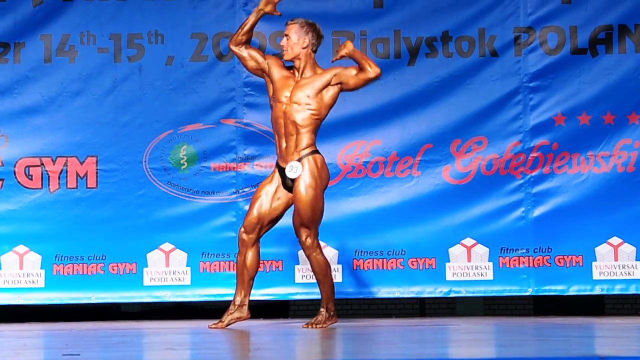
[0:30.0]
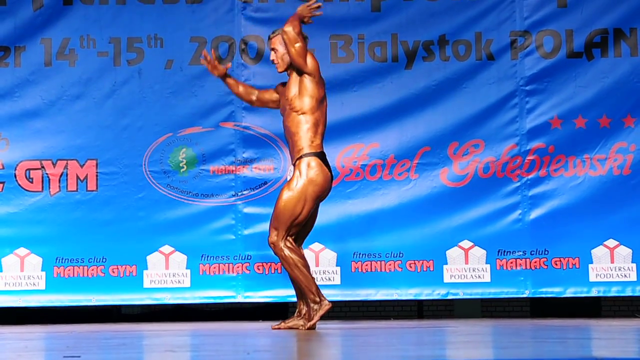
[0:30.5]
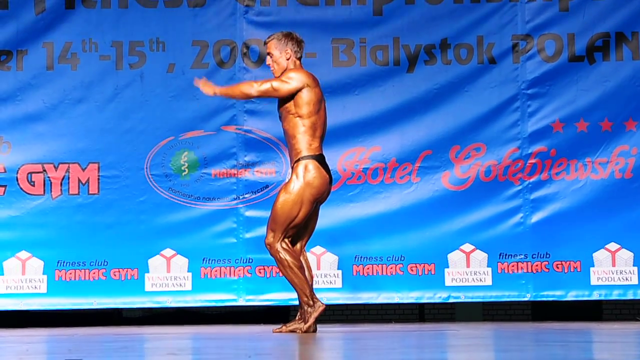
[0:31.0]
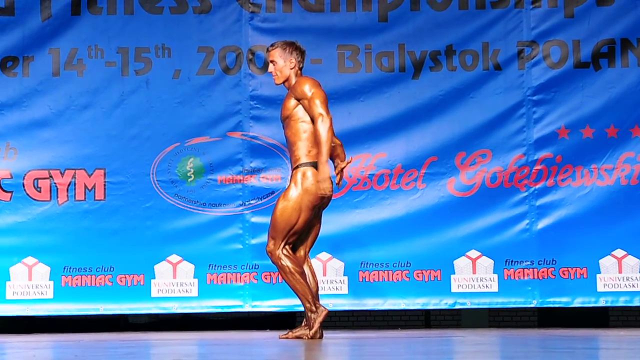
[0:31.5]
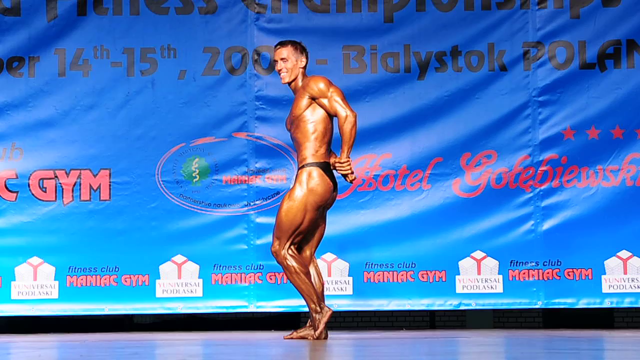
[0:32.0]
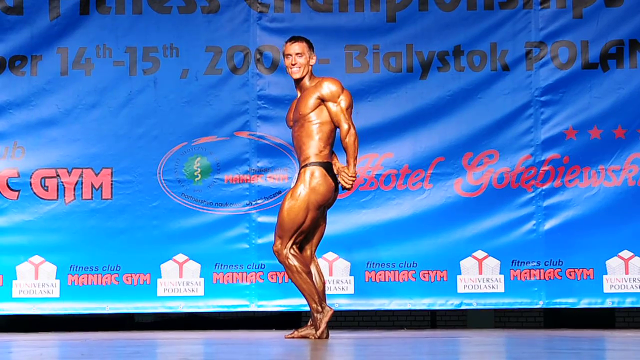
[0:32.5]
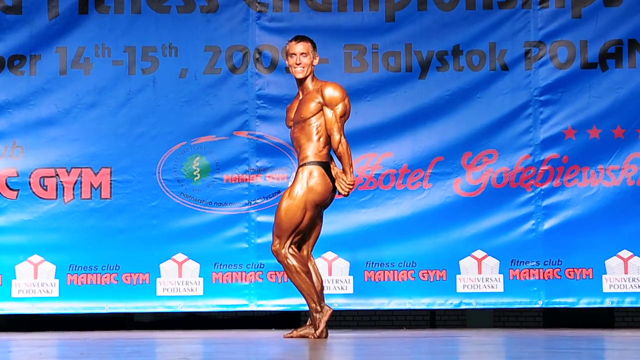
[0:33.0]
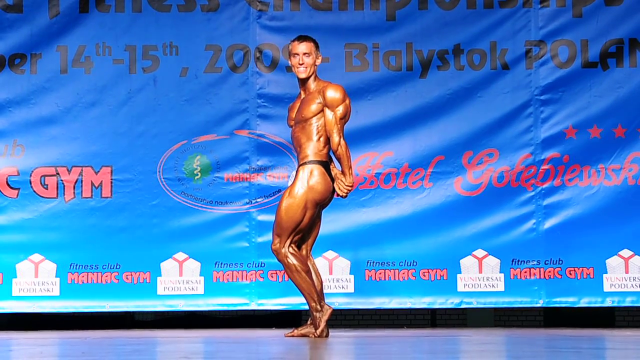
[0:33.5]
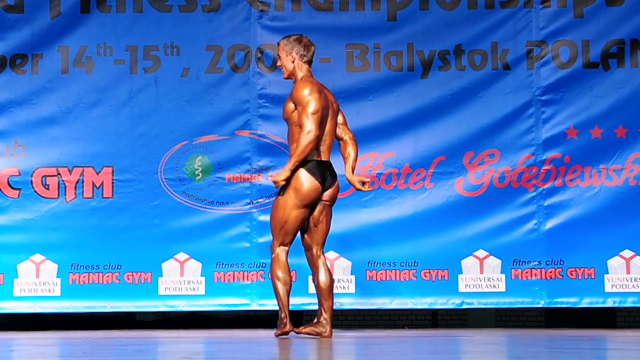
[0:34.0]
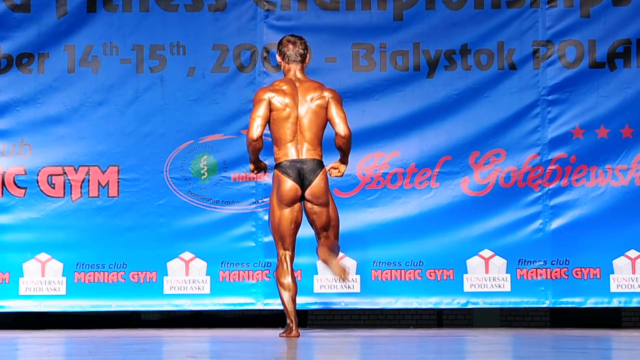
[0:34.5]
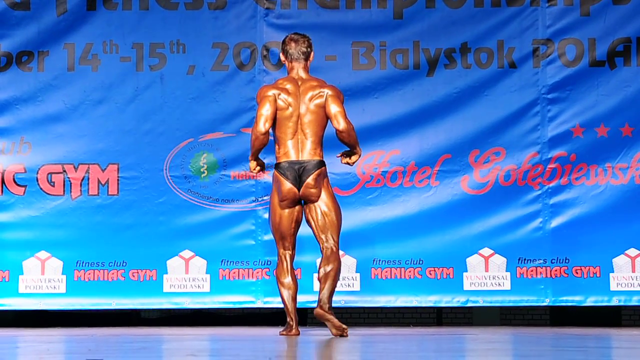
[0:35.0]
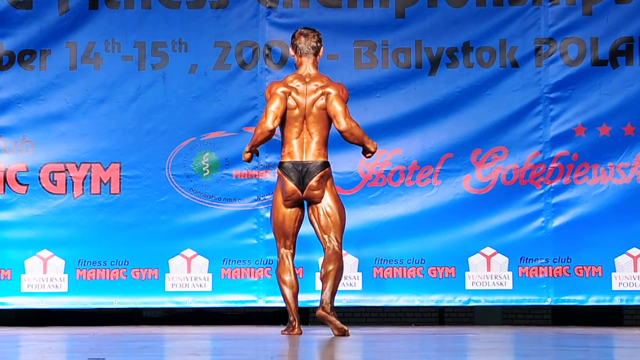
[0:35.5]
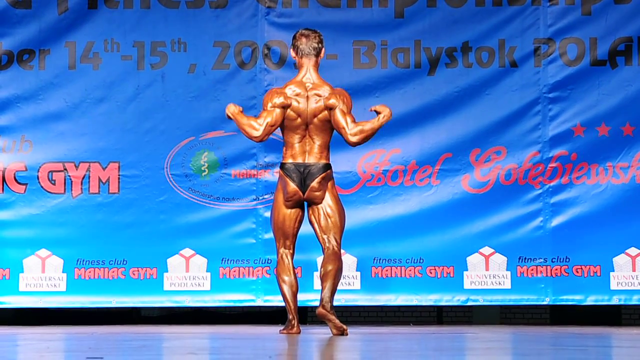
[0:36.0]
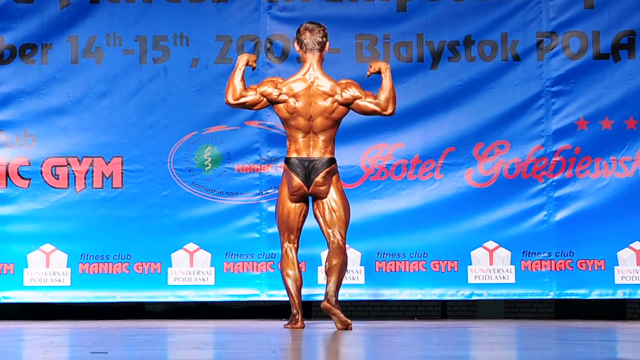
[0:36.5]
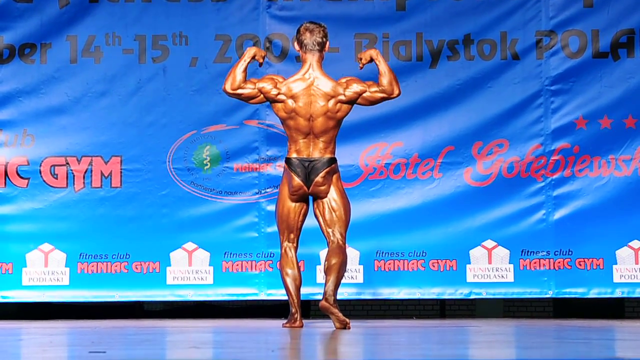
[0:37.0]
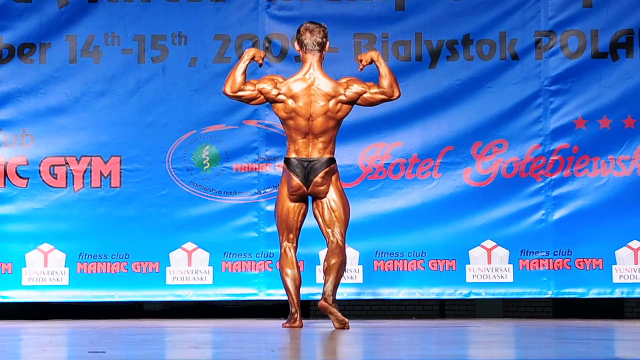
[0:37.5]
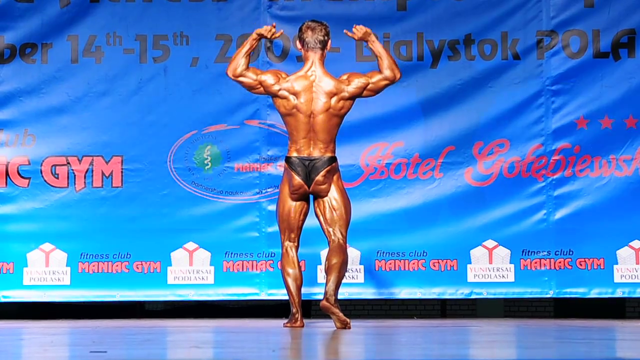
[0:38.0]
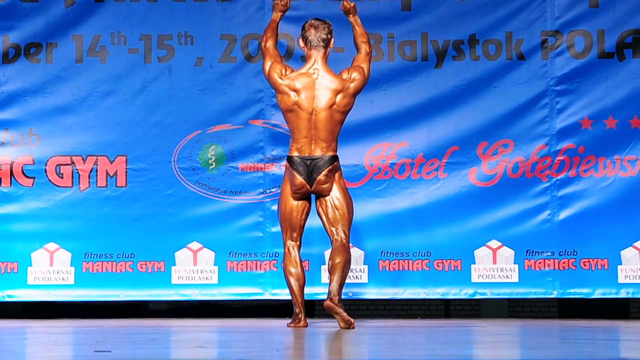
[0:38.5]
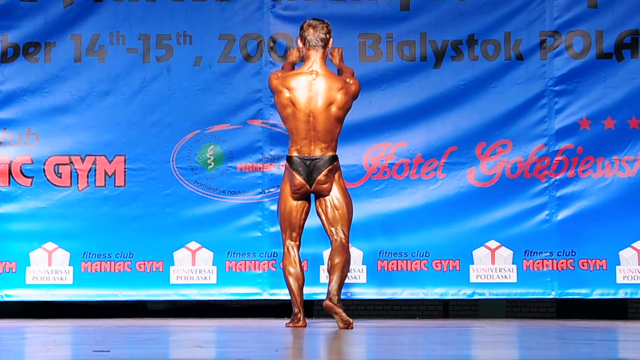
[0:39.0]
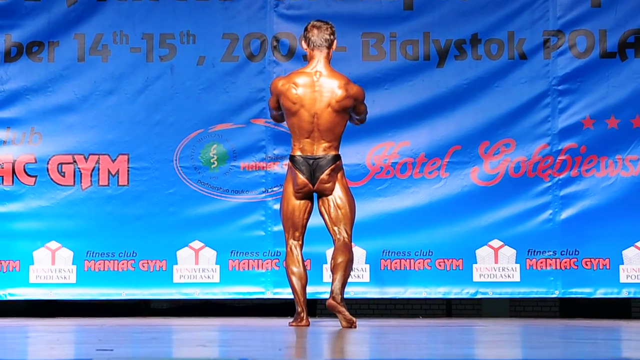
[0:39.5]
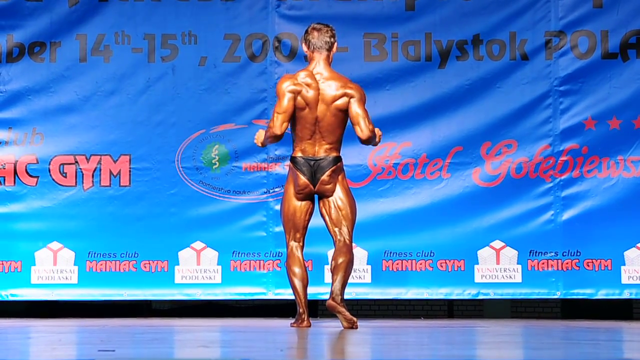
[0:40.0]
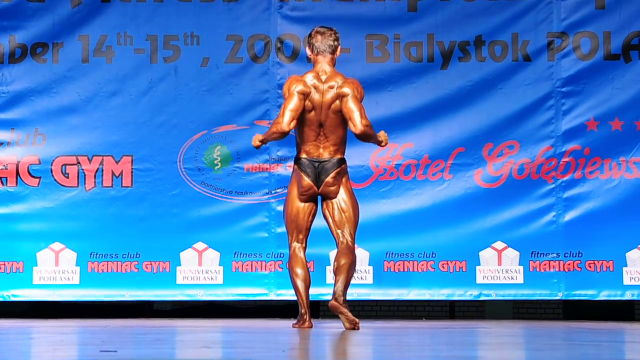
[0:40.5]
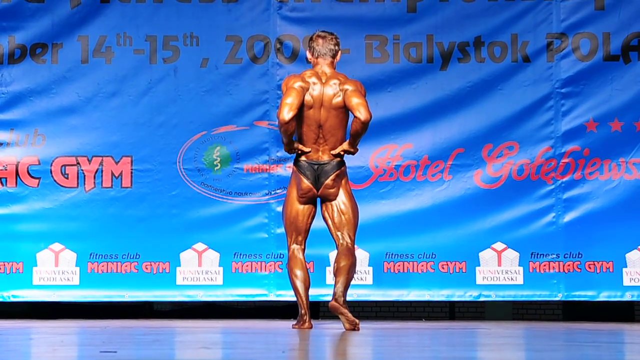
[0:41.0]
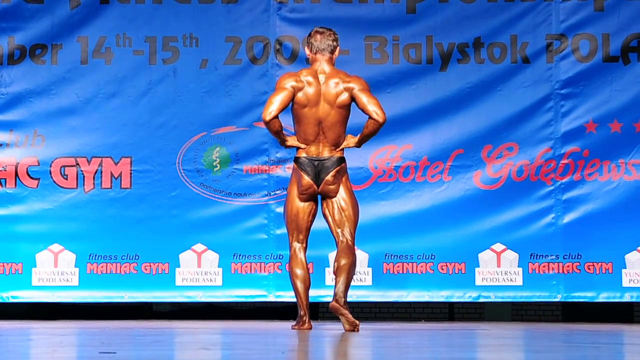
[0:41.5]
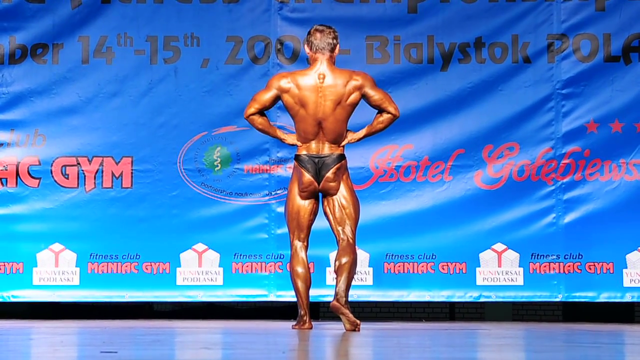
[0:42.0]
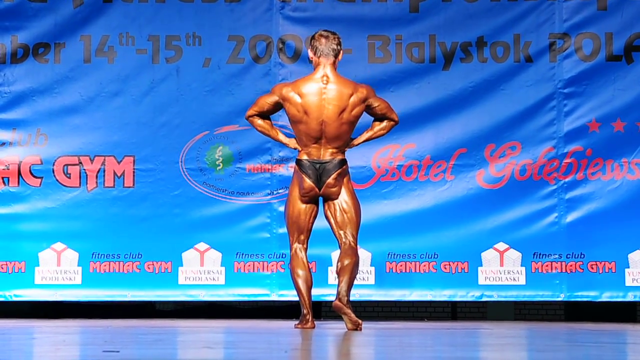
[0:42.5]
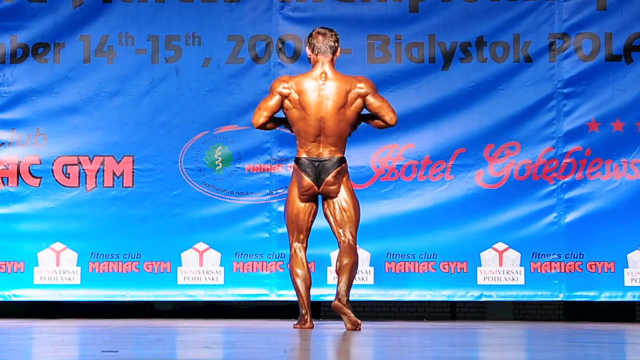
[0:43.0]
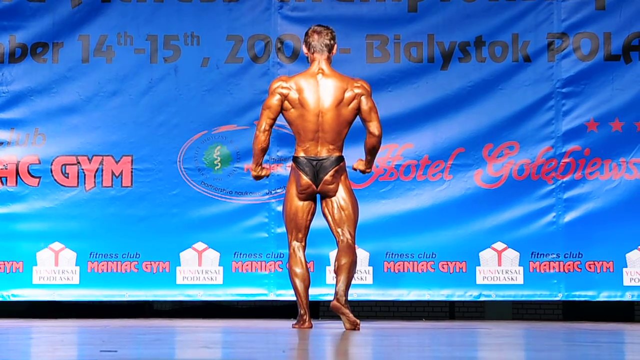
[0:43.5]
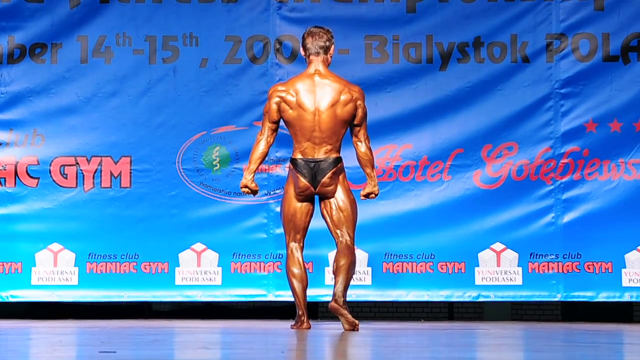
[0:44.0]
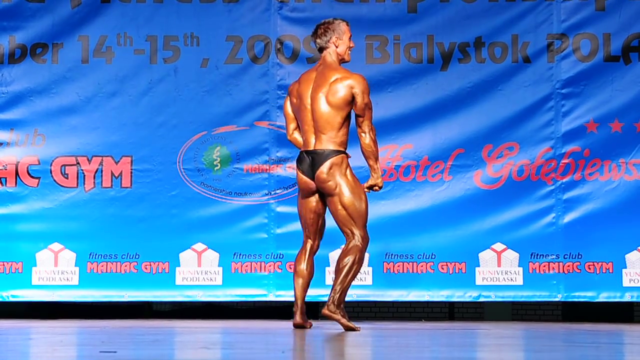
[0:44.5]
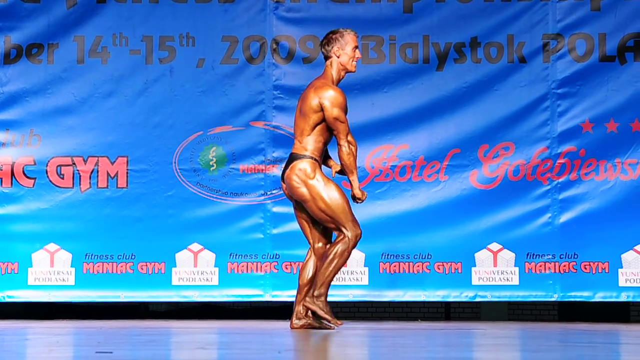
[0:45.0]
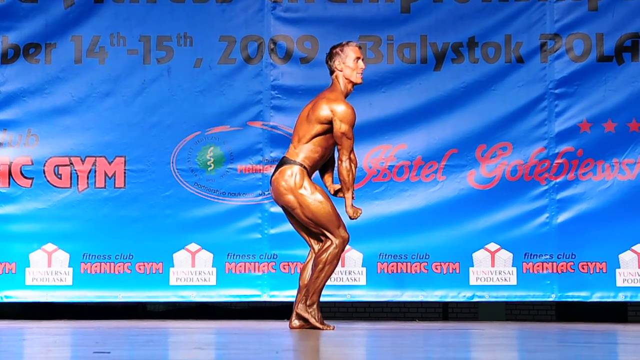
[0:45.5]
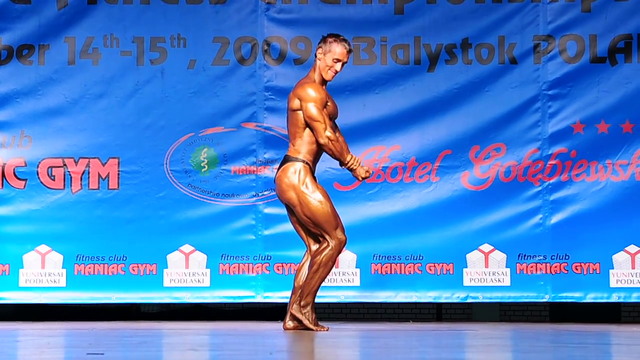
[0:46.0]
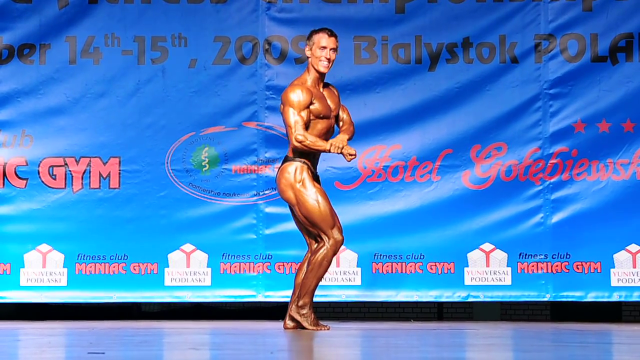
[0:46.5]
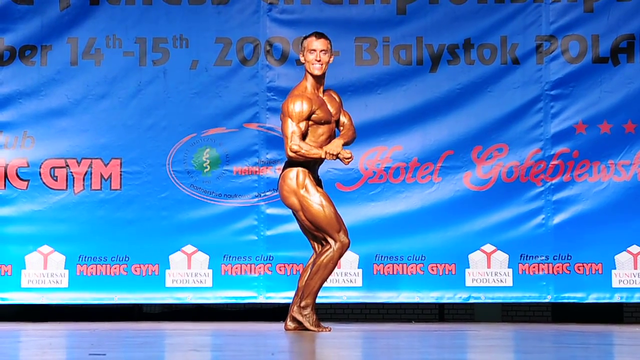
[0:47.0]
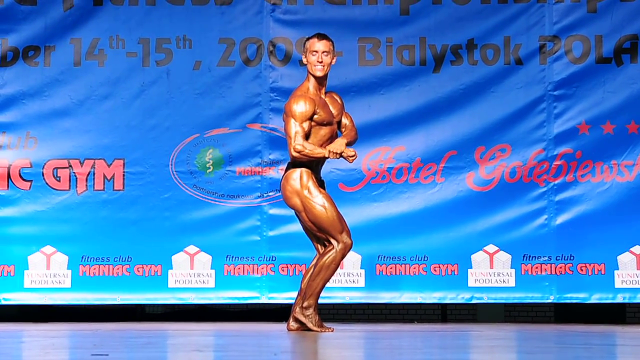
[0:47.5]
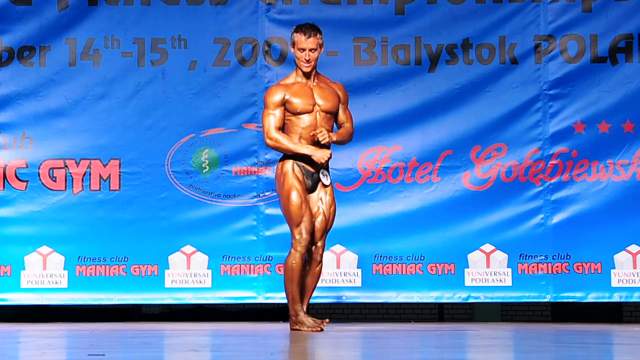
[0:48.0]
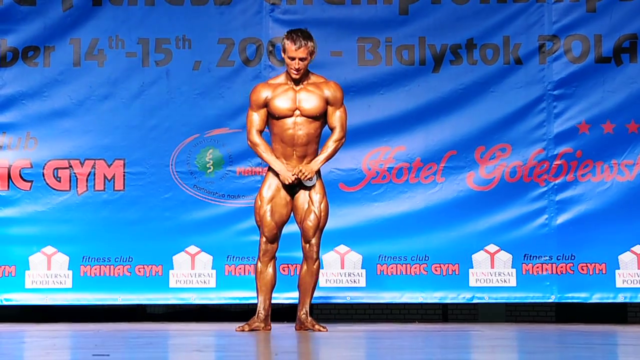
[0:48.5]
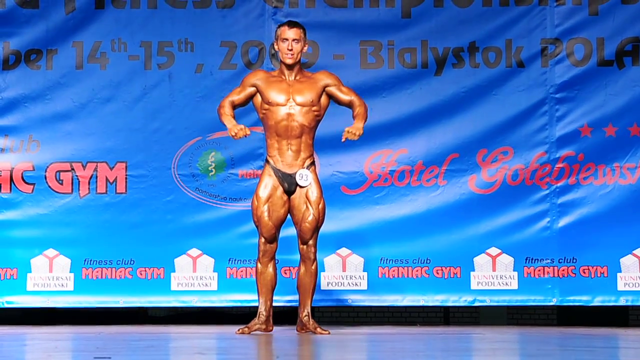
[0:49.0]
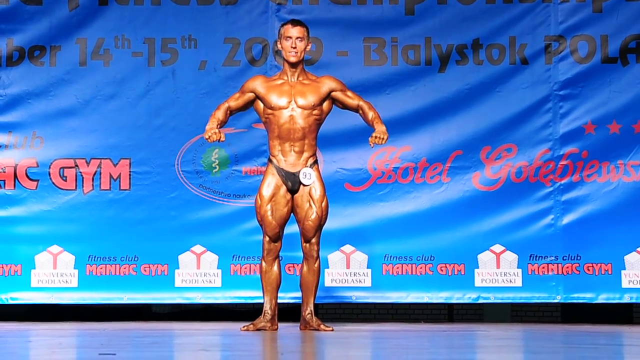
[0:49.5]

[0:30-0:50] The bodybuilder is turned around, showing his back and posing in various positions to display the muscular definition in his back. He then turns back around and starts flexing his arms, displaying his definition to judges who are not shown in the video. The competition, in Poland, looks like a body fitness championship, and the man is a contestant.